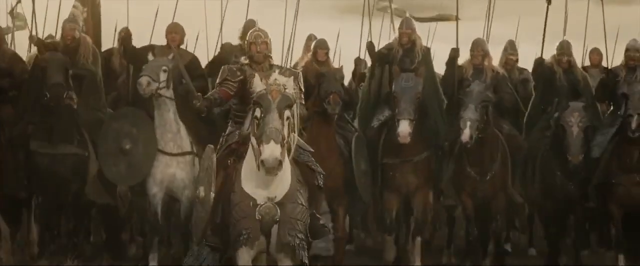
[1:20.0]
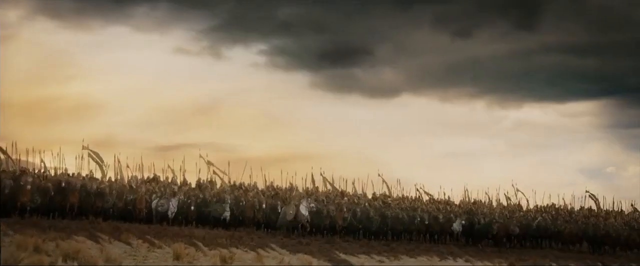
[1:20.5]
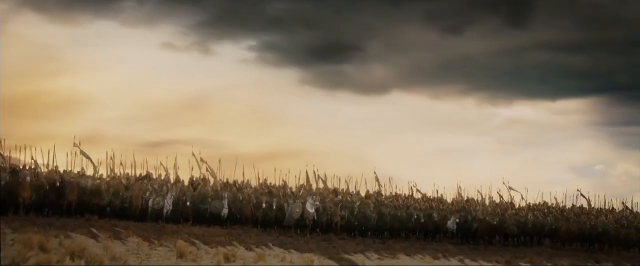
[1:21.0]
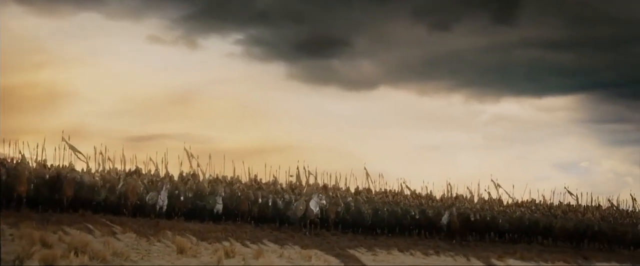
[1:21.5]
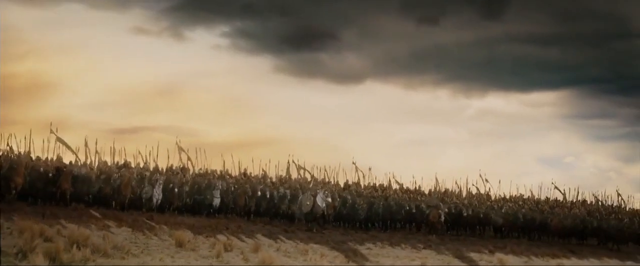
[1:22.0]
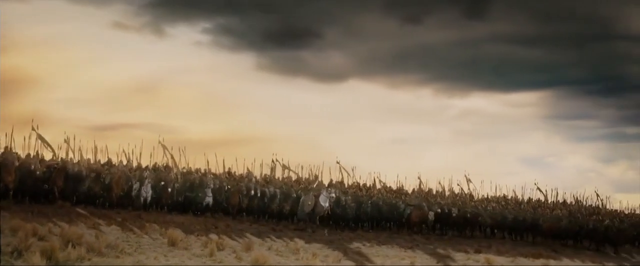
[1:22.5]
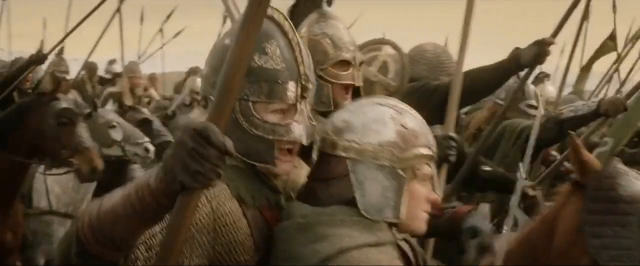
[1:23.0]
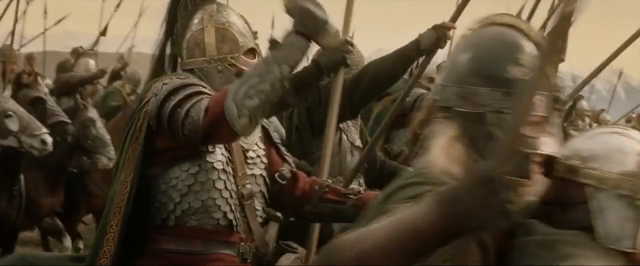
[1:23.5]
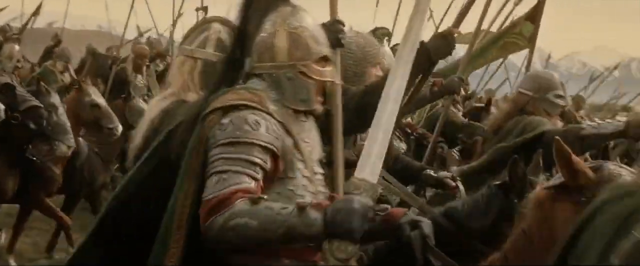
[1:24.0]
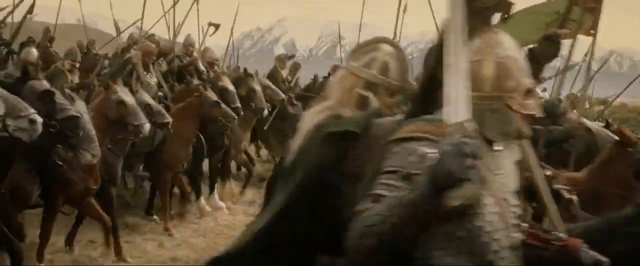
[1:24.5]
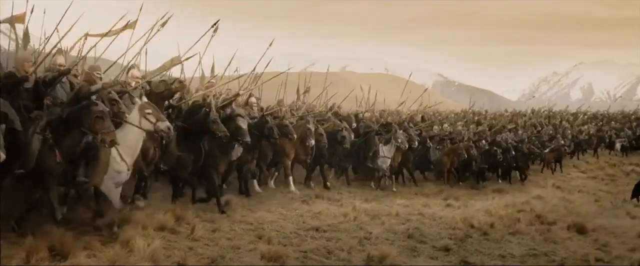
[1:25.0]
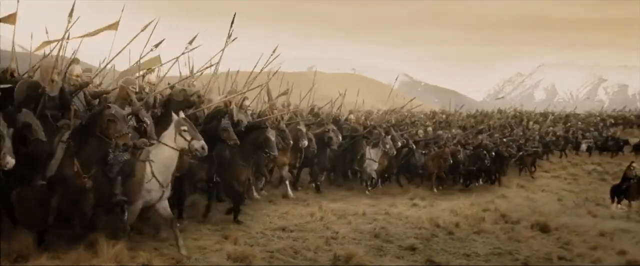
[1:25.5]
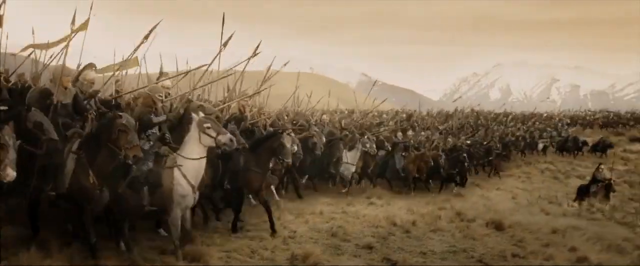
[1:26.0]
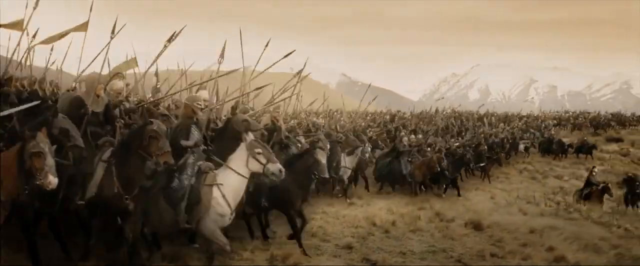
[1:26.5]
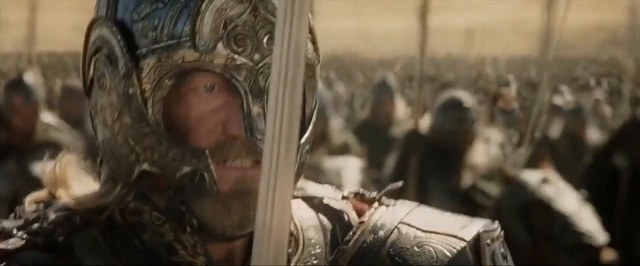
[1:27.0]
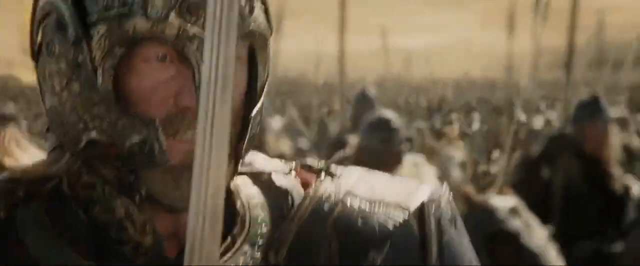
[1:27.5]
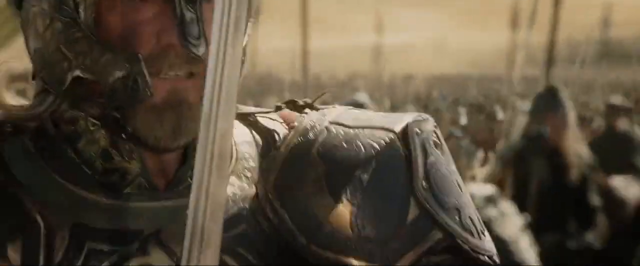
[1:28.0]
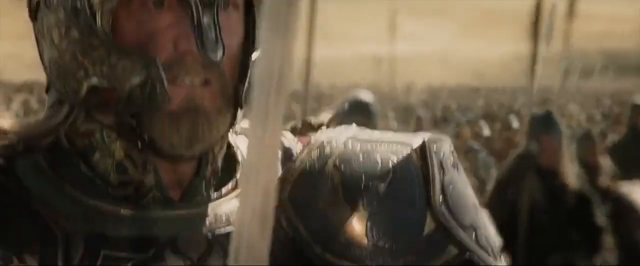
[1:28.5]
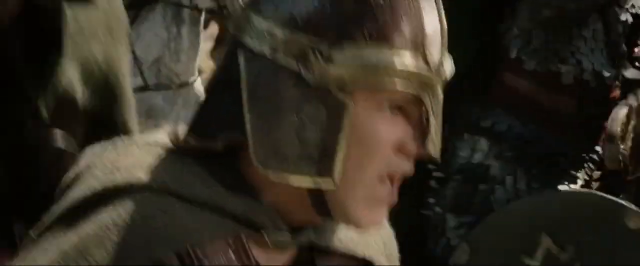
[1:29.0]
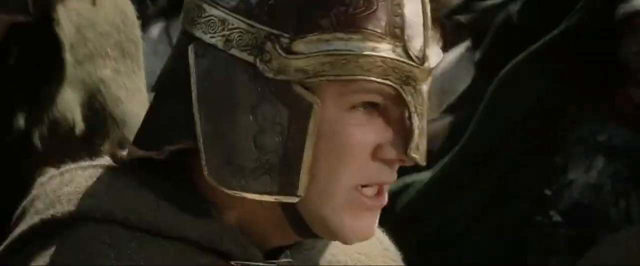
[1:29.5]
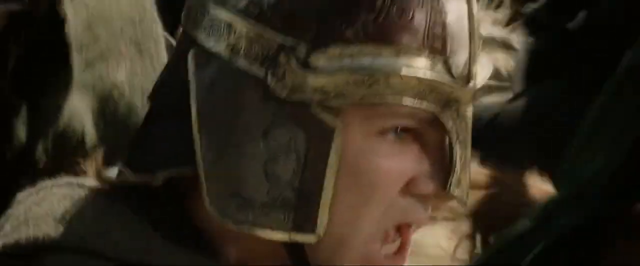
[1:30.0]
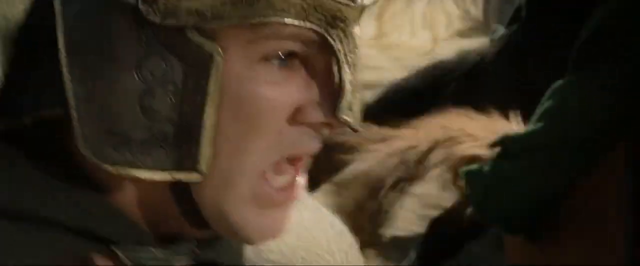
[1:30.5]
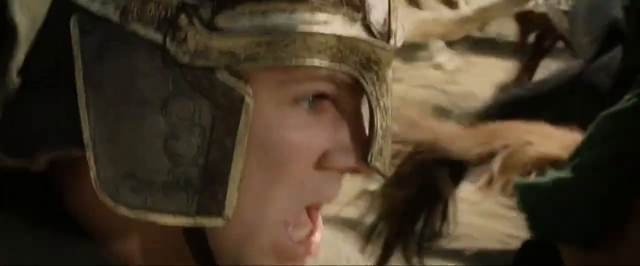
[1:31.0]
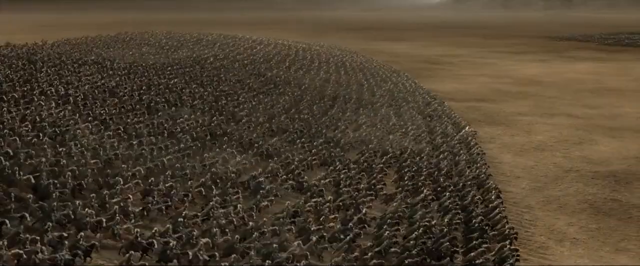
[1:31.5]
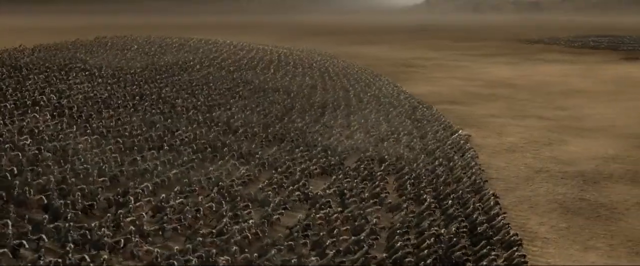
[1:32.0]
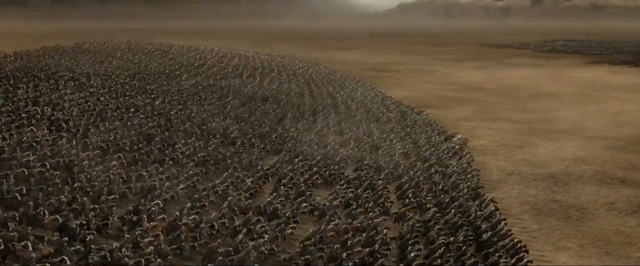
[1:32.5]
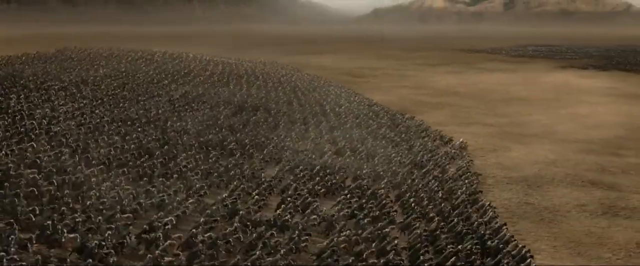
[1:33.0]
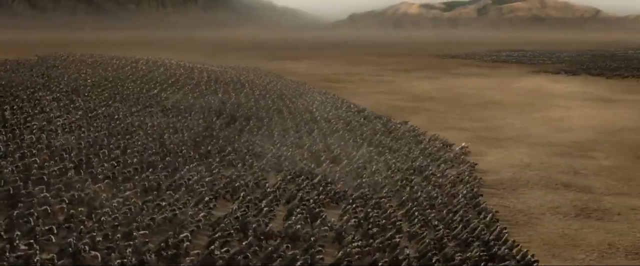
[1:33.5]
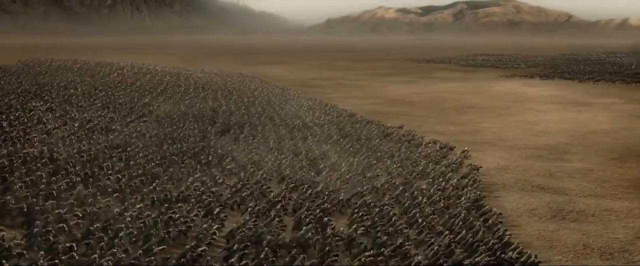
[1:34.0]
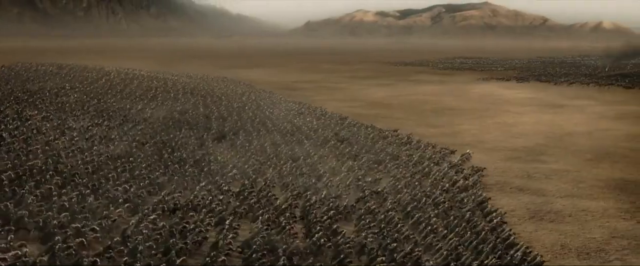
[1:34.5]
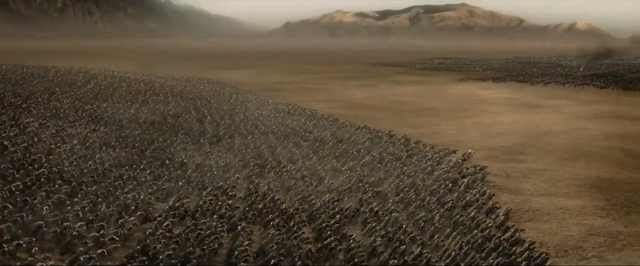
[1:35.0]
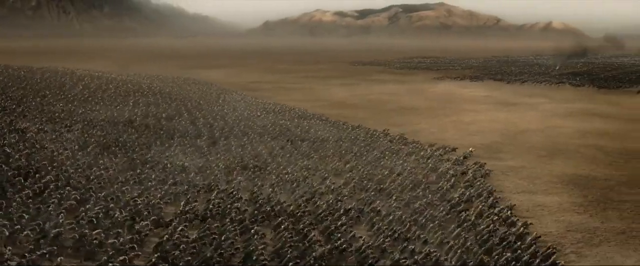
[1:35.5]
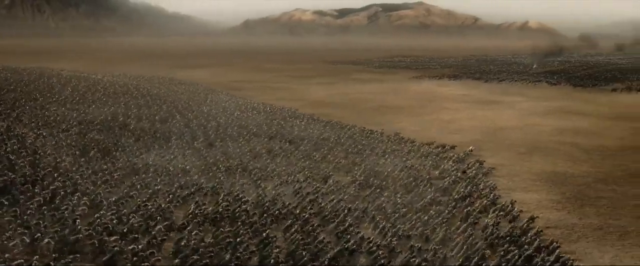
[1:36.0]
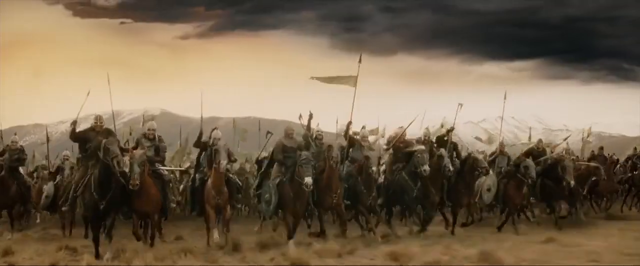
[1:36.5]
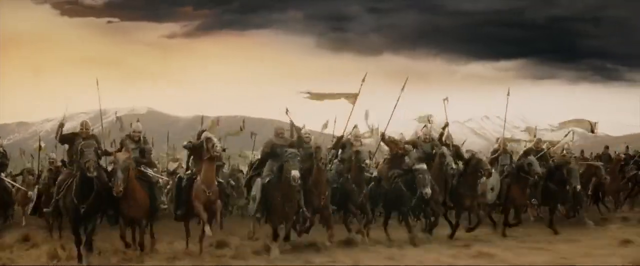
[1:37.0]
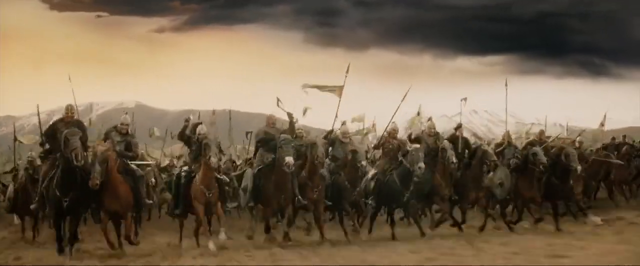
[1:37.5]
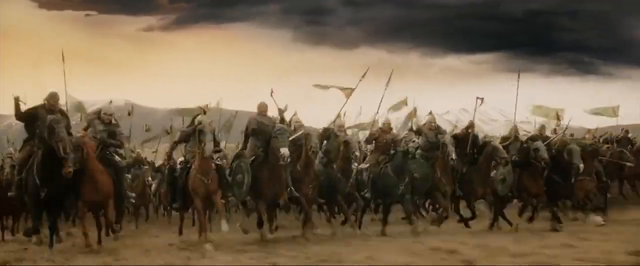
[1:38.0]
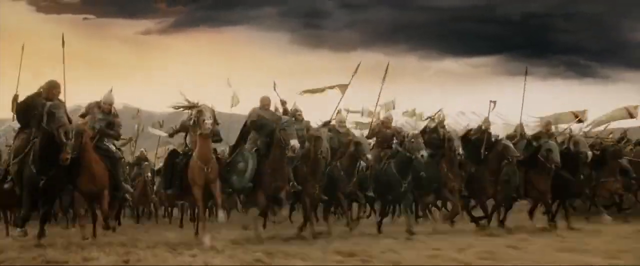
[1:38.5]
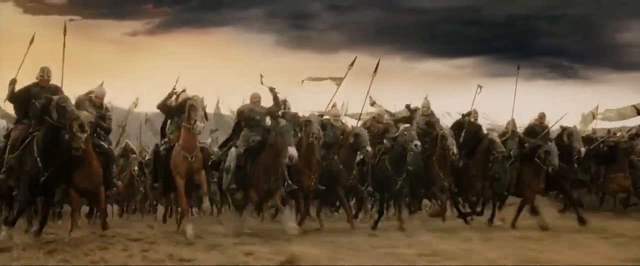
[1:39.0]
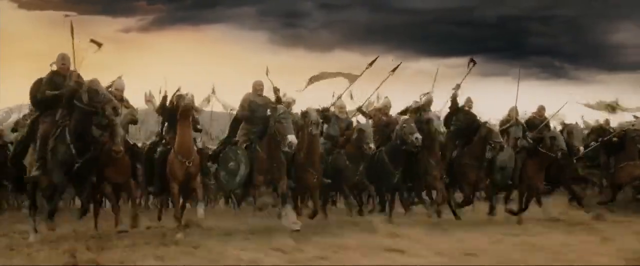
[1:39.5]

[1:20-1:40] The footage appears to be from a Lord of the Rings film. It opens with a front shot of the army under a dark and cloudy sky as the army slowly starts charging forward. It cuts to the woman and the short man on a horse, both brandishing weapons and slowly moving forward, then to a front long shot of the army slowly moving forward. A close-up shows the face of the man on the white horse, followed by a close-up of the face of the short man on a horse while he is shouting. A high, wide shot shows the entire army charging forward, then a closer front shot shows all the people on horses charging forward. It cuts to a close front shot of the opposing army of orcs readying their bows before abruptly ending.